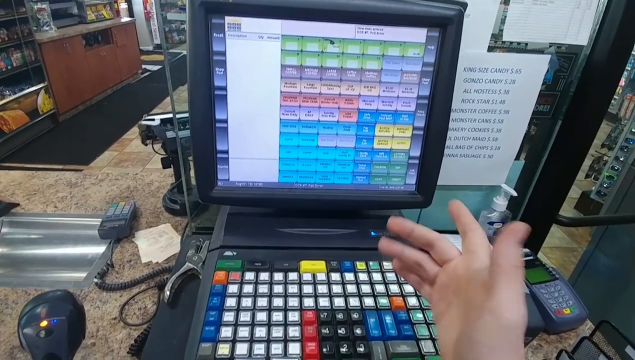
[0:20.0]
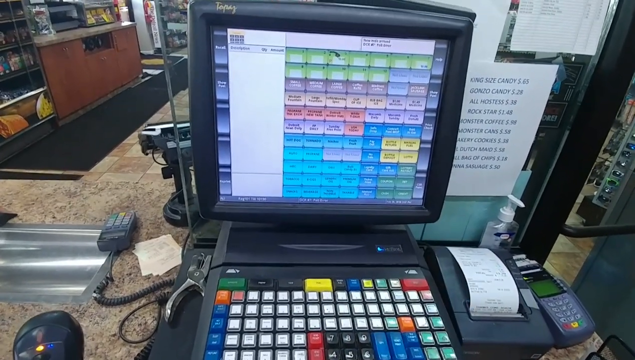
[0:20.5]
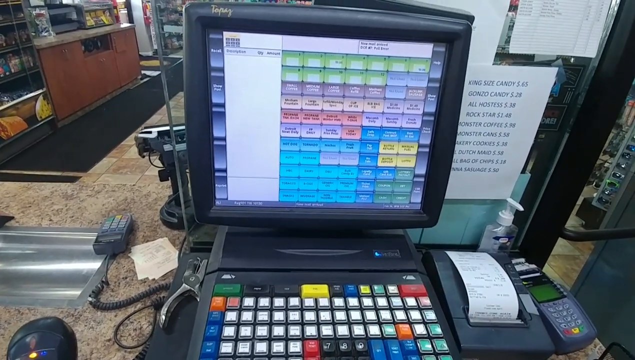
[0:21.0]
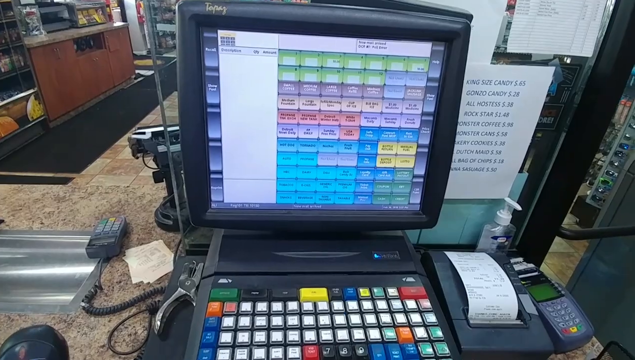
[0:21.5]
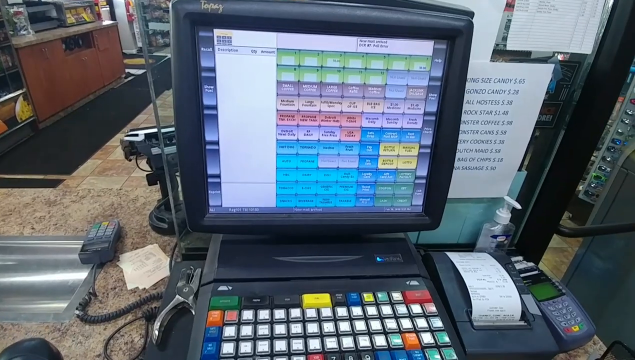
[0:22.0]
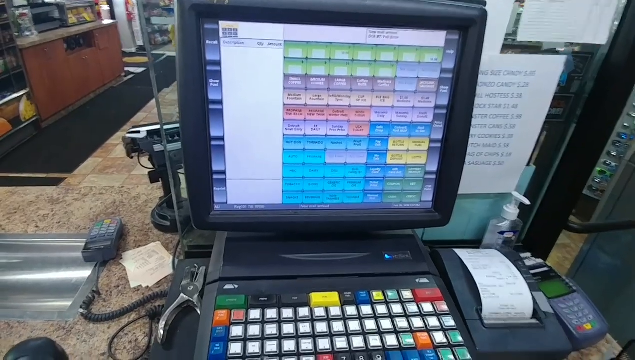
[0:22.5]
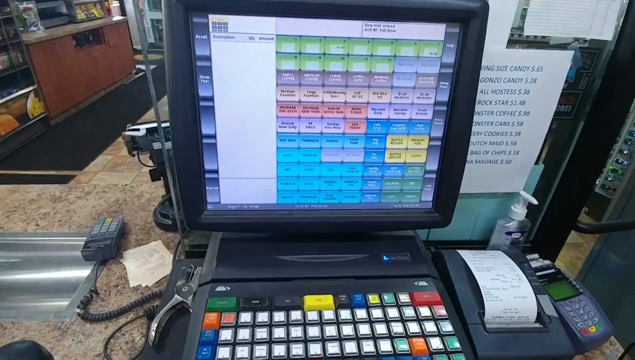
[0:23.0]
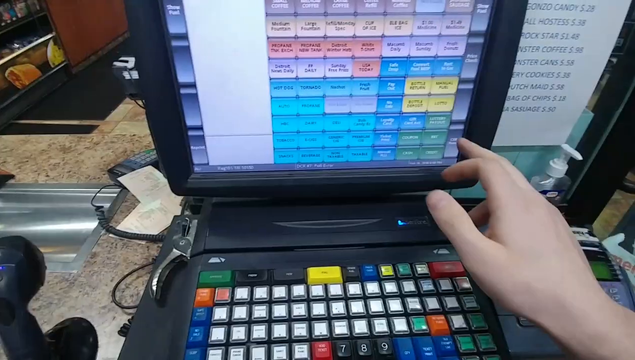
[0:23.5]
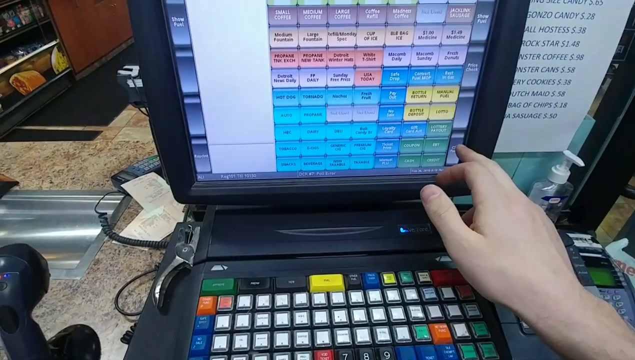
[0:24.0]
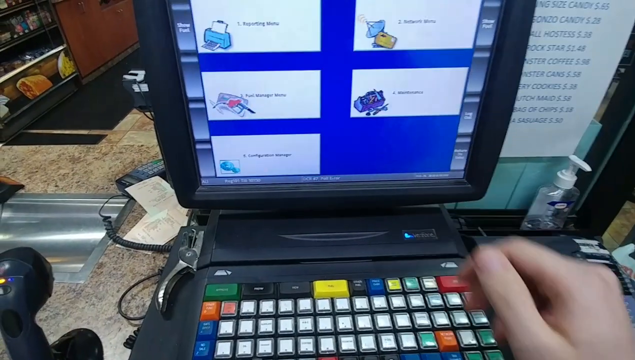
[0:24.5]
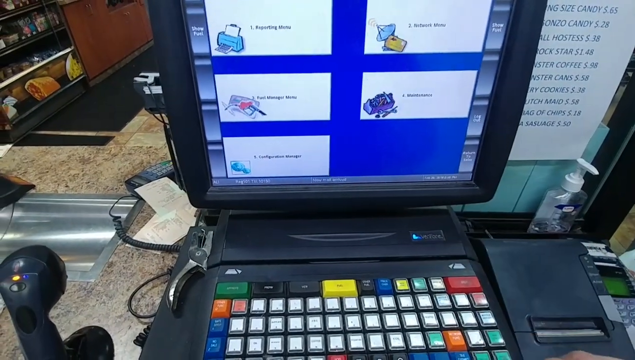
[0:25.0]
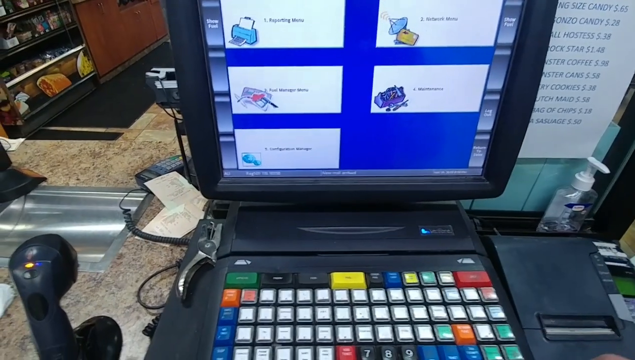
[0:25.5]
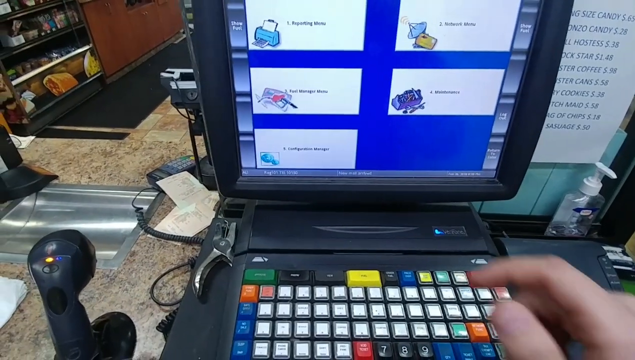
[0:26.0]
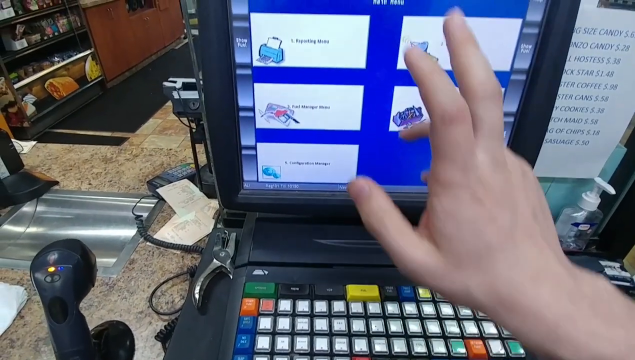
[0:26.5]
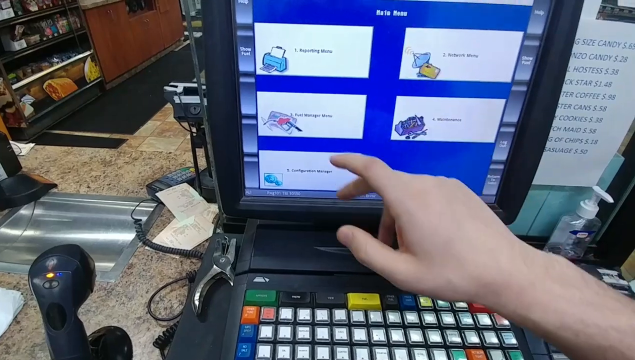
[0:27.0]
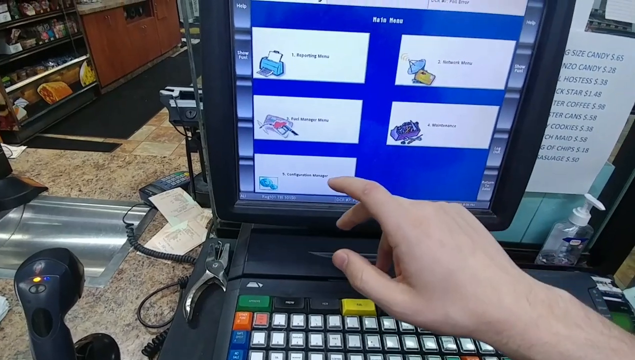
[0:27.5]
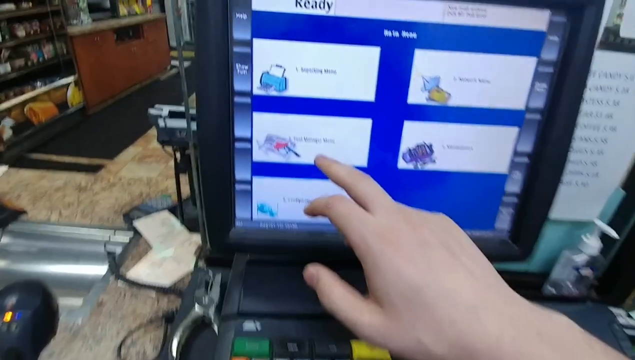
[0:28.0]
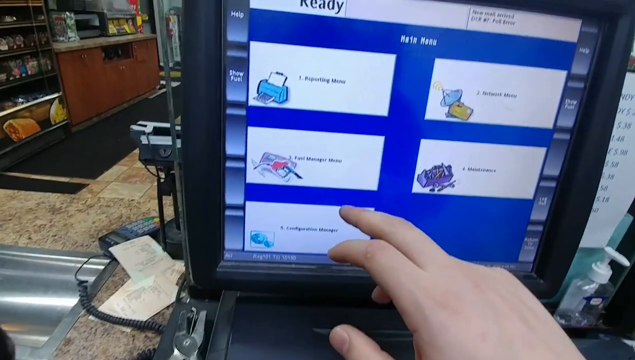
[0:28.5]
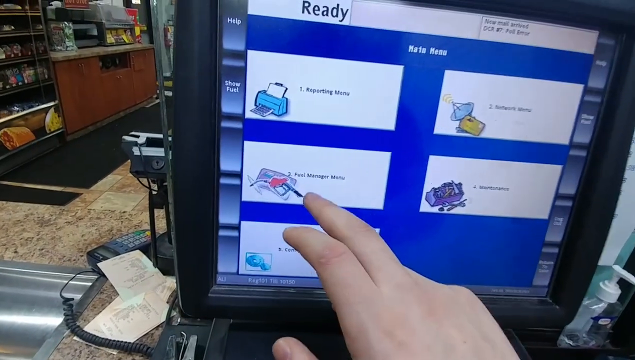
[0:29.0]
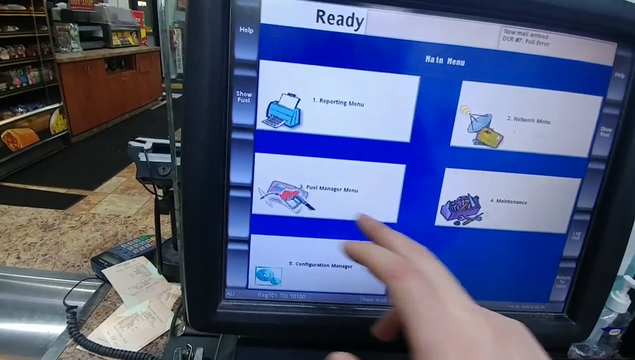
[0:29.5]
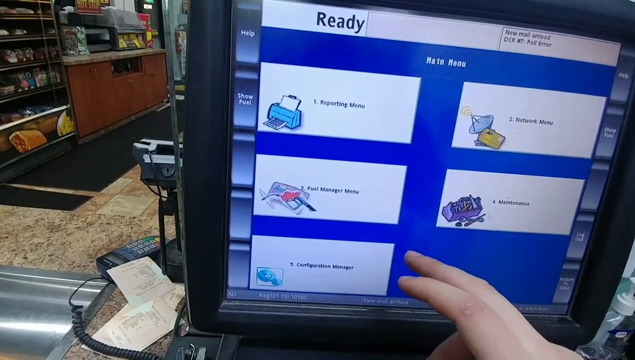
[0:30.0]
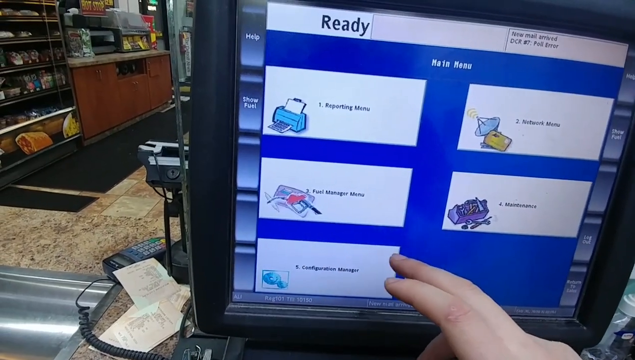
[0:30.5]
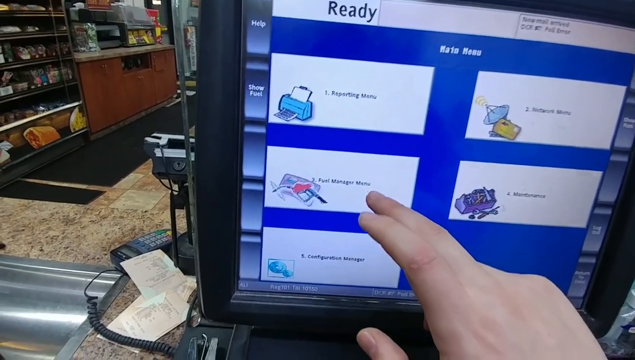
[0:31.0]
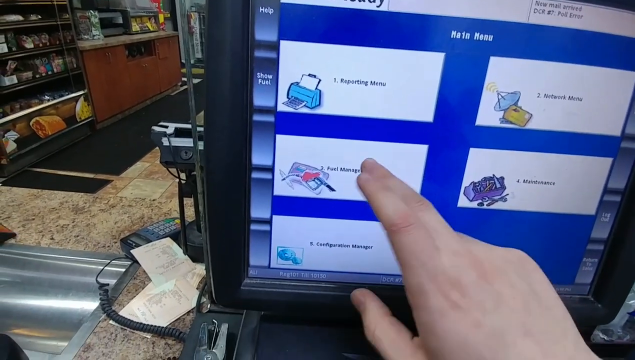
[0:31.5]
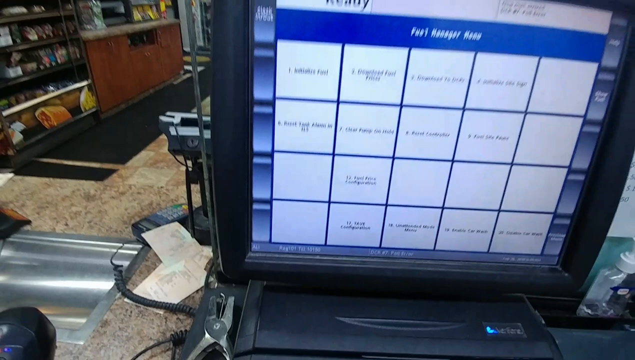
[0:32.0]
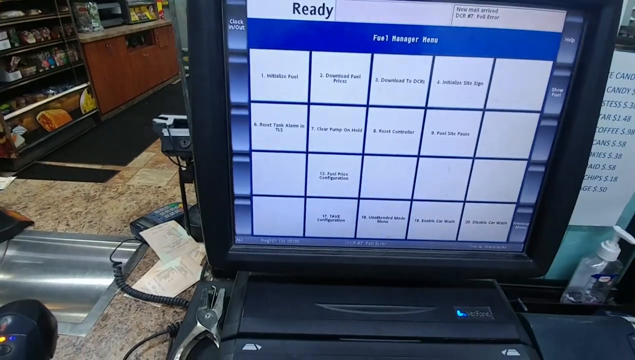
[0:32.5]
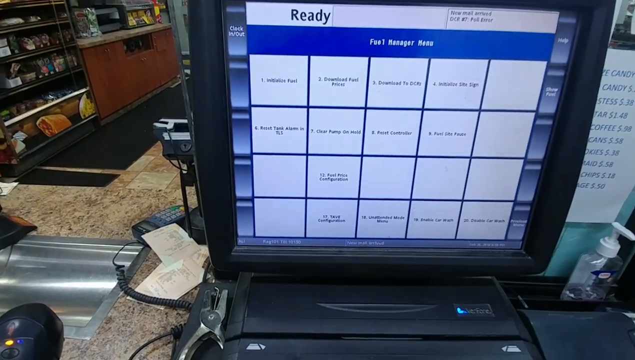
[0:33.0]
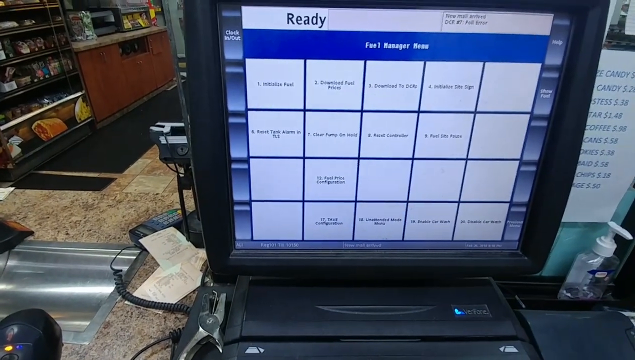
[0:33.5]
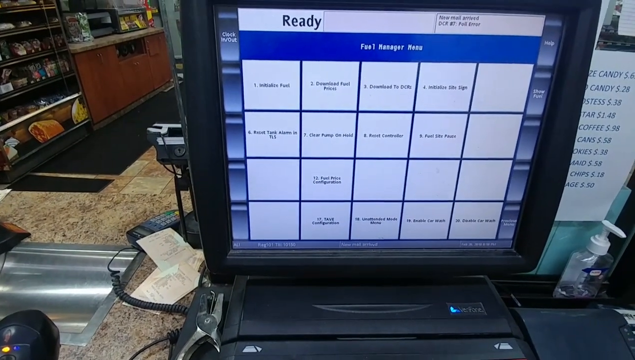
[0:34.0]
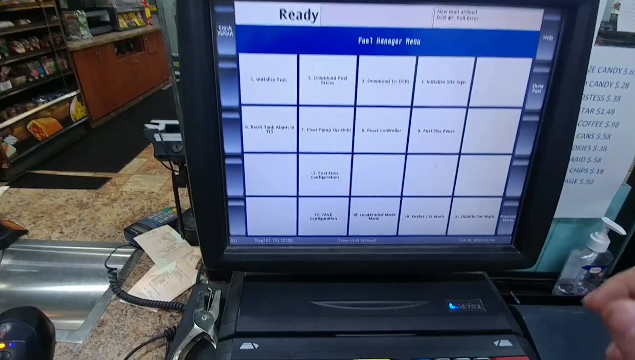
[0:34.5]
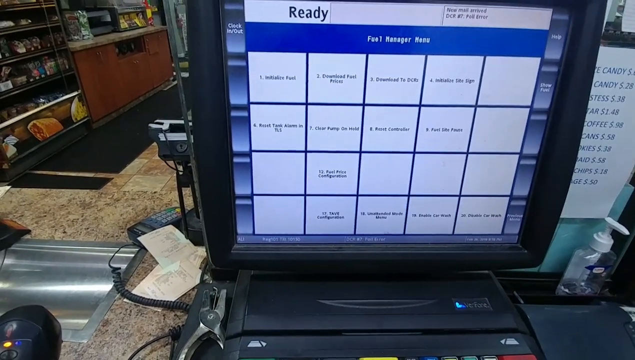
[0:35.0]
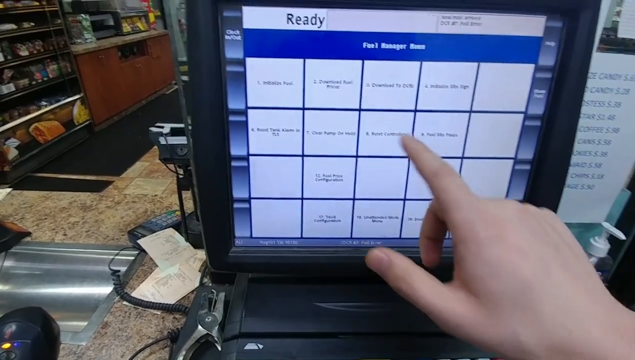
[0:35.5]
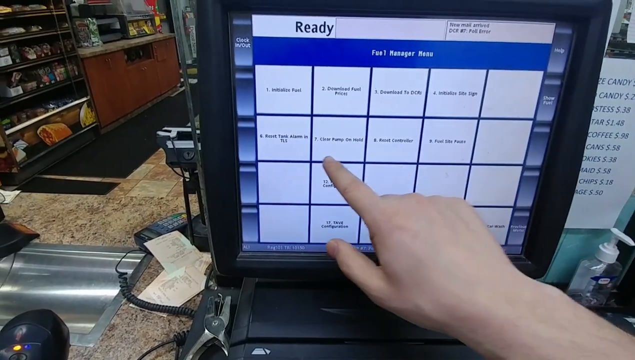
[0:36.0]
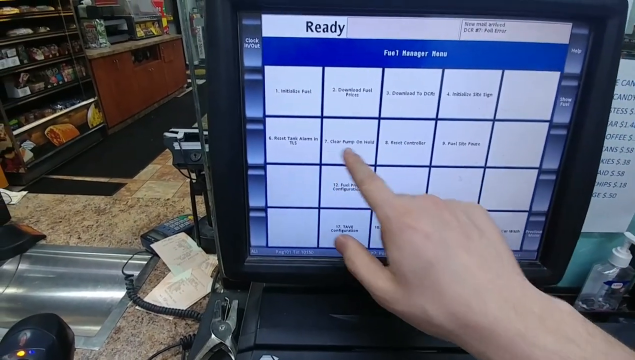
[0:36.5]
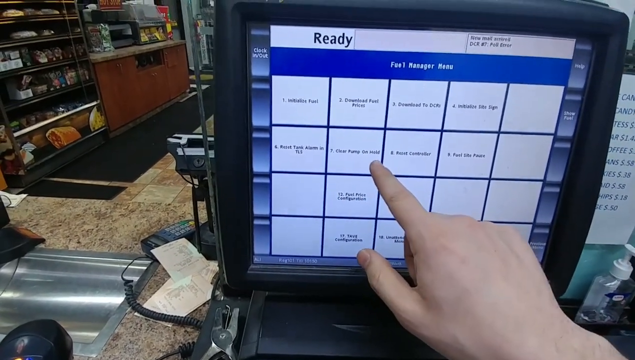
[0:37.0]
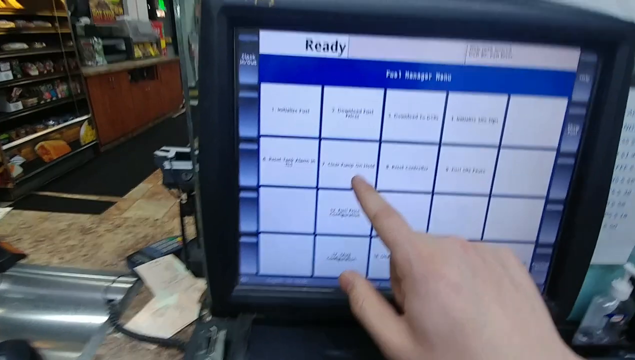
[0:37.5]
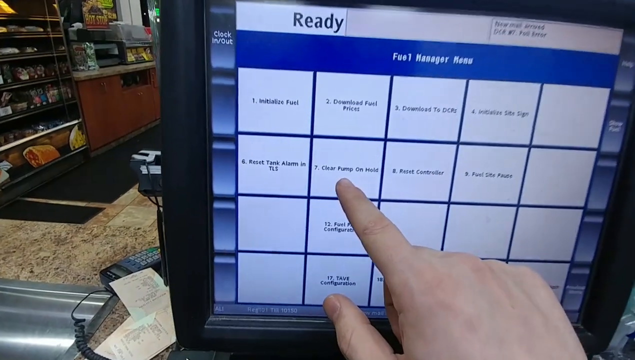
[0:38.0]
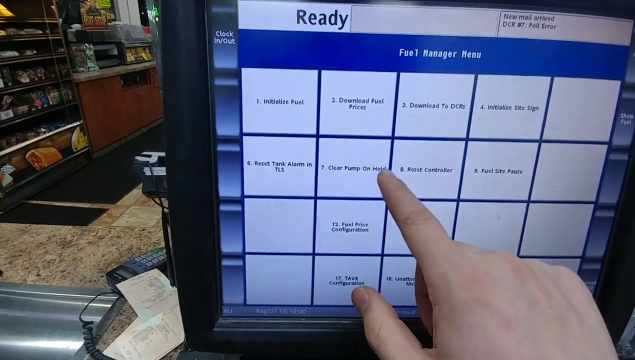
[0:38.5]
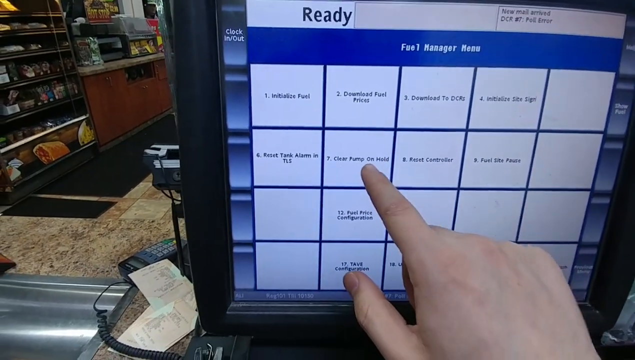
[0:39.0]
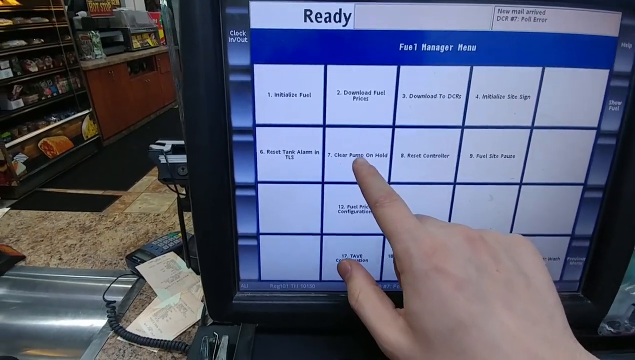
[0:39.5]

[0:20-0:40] In the zoomed-out view, a hand interacts with the cashier computer. The person presses something on the screen, which opens a "main menu"; they select "fuel manager menu" and then press "clear pump on hold". This opens some sort of calculator-type menu with many buttons to press on the touchscreen. A receipt is being printed out on the right side of the cash register. To the right of that is a white piece of paper listing common prices for products such as "King Size Candy Bar", "Gonzo Candy", "All Hostess" and "Rockstar".